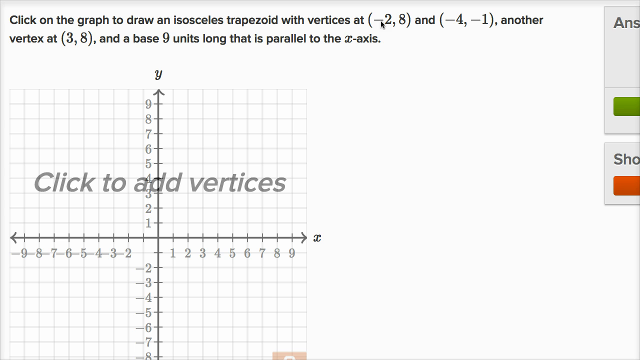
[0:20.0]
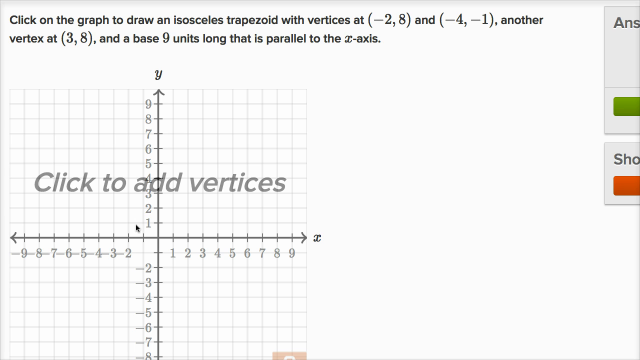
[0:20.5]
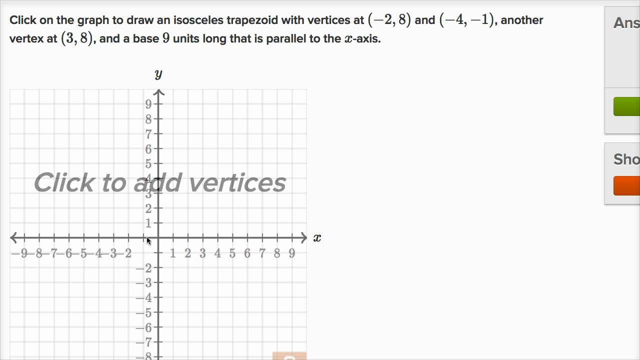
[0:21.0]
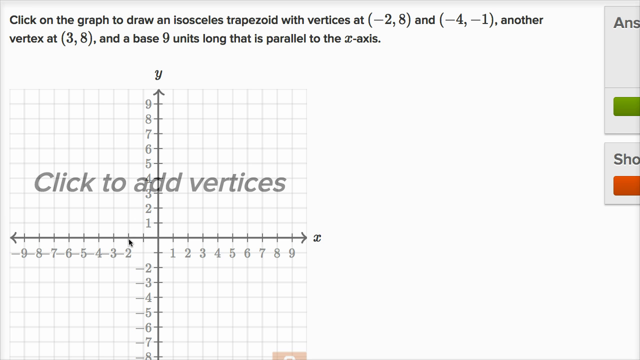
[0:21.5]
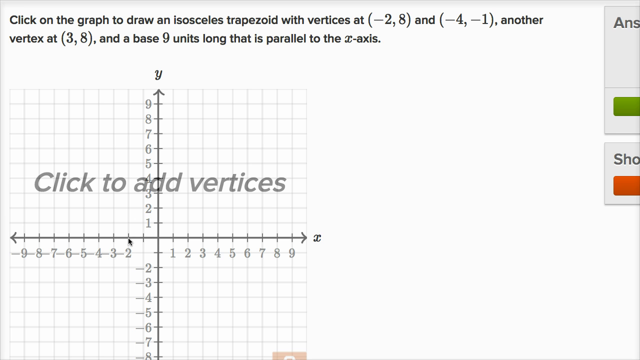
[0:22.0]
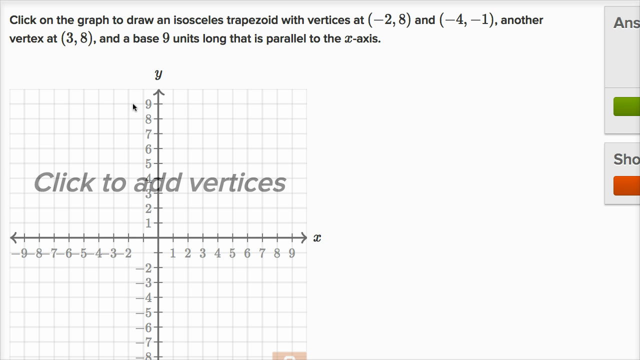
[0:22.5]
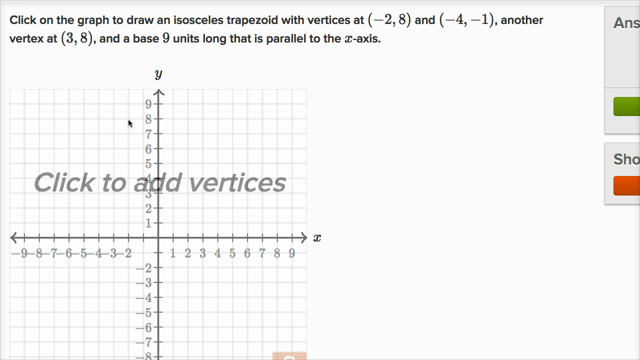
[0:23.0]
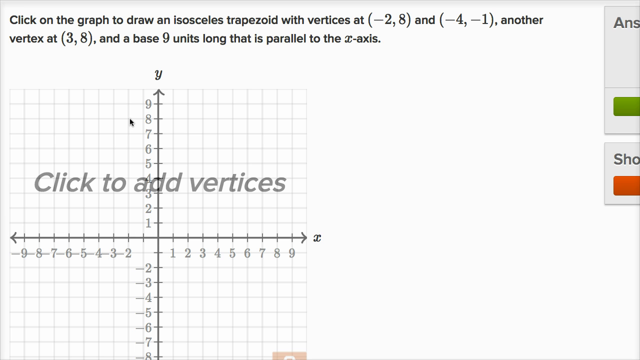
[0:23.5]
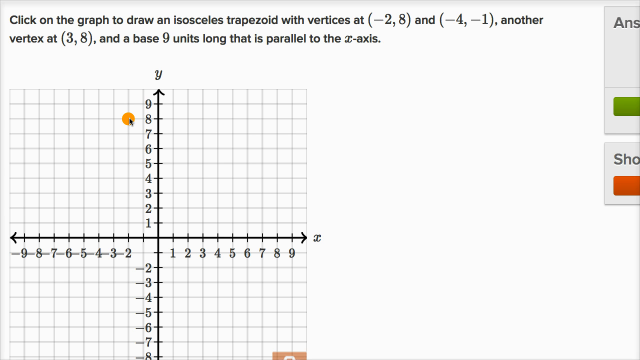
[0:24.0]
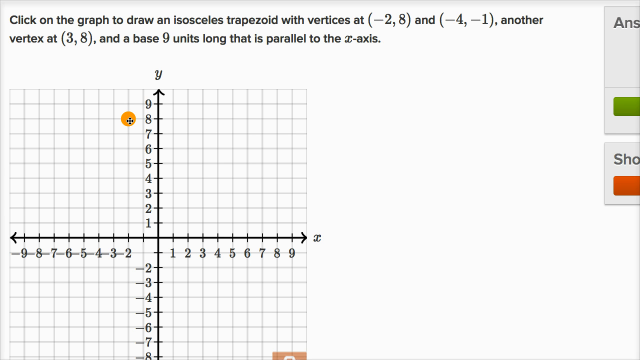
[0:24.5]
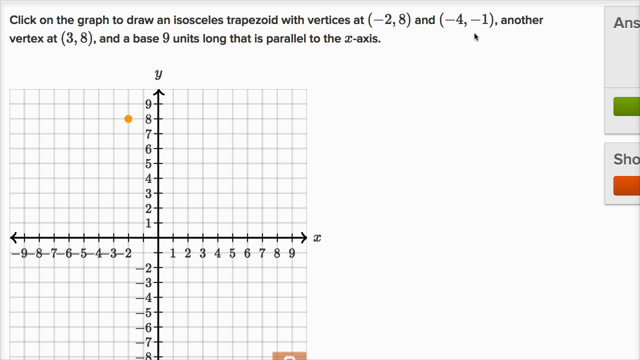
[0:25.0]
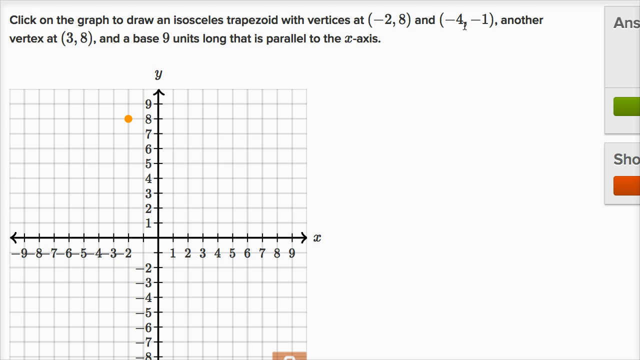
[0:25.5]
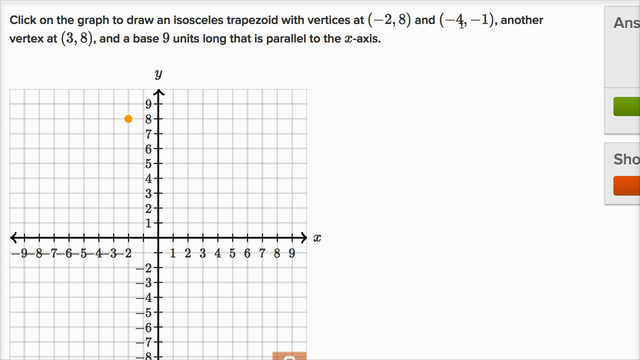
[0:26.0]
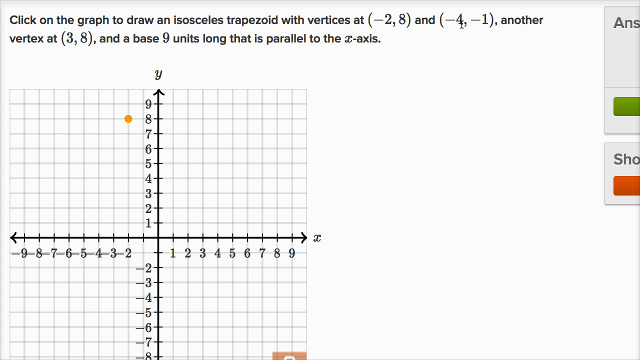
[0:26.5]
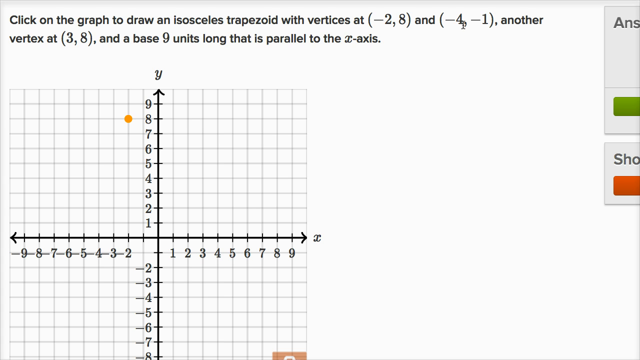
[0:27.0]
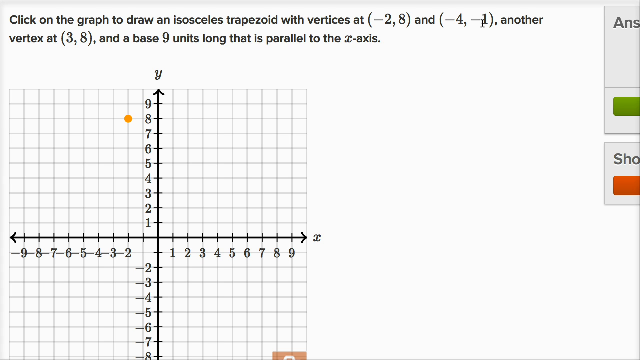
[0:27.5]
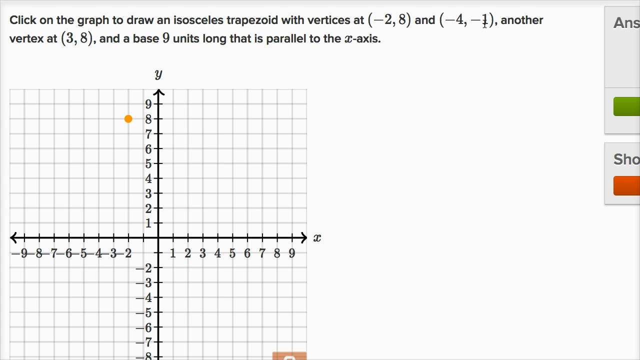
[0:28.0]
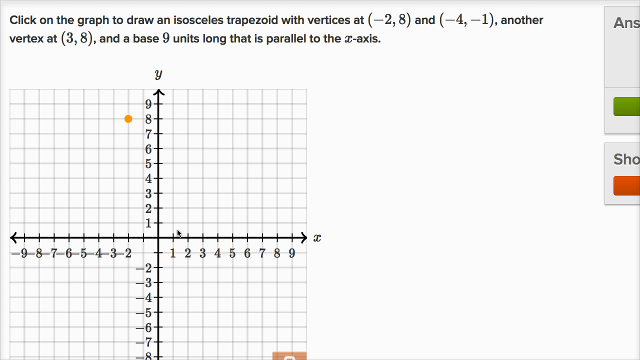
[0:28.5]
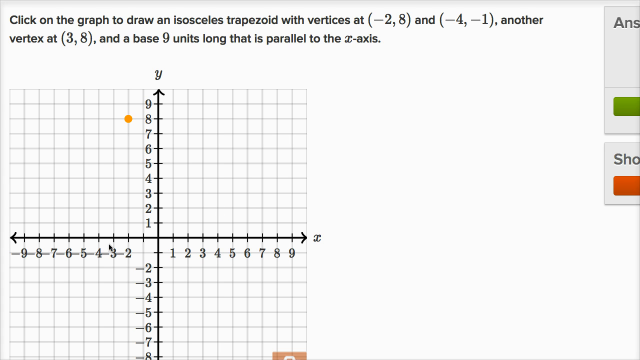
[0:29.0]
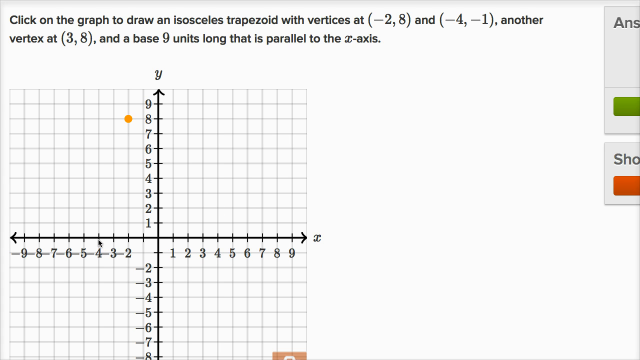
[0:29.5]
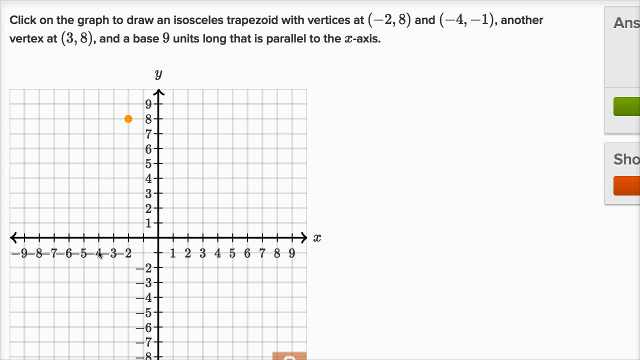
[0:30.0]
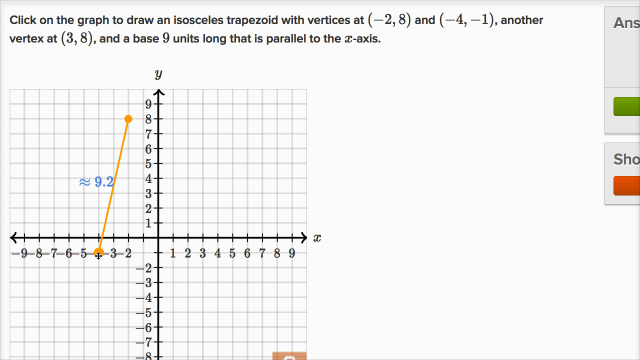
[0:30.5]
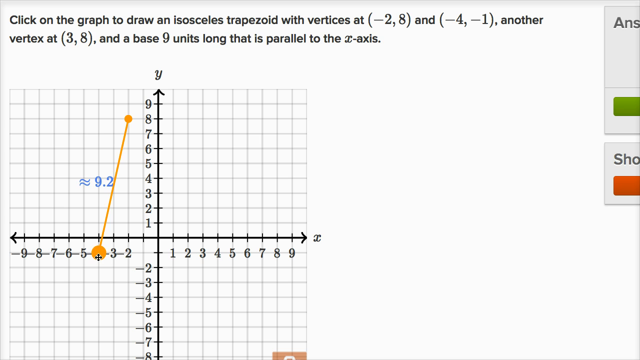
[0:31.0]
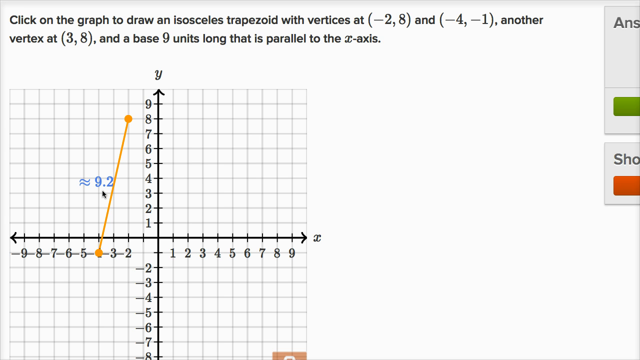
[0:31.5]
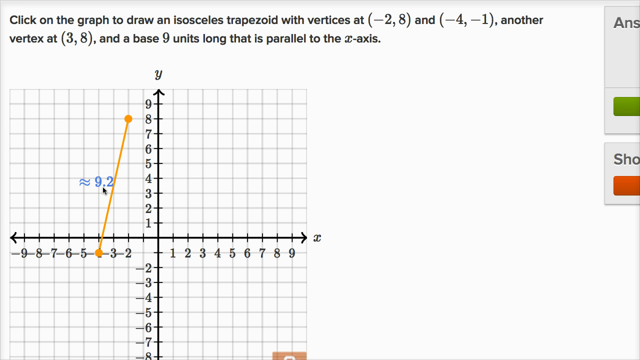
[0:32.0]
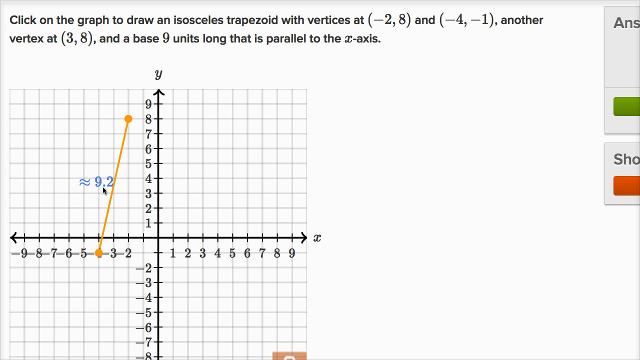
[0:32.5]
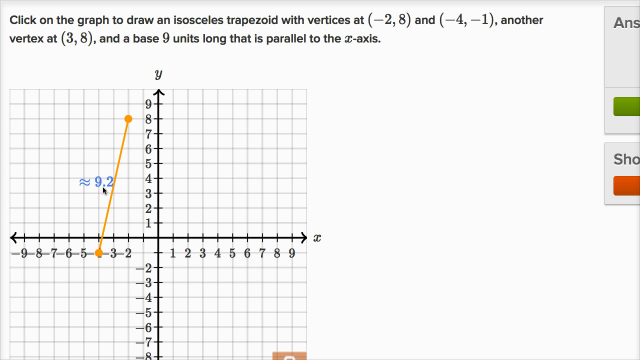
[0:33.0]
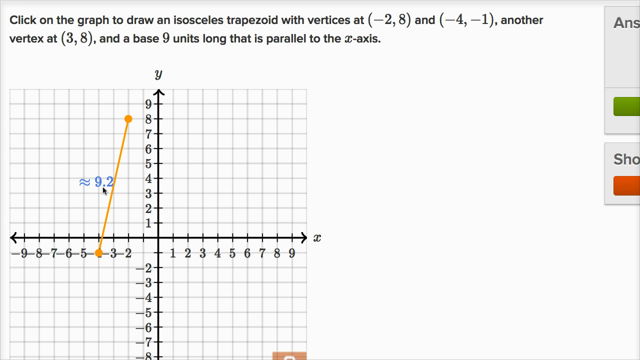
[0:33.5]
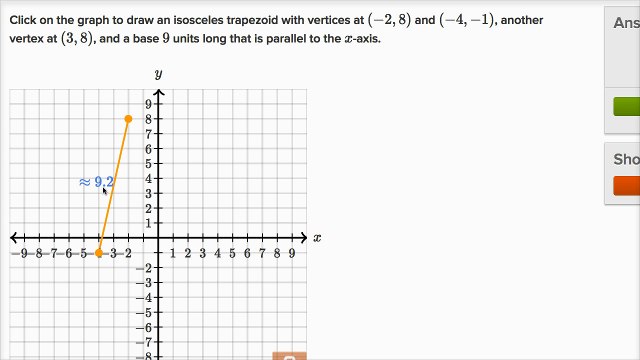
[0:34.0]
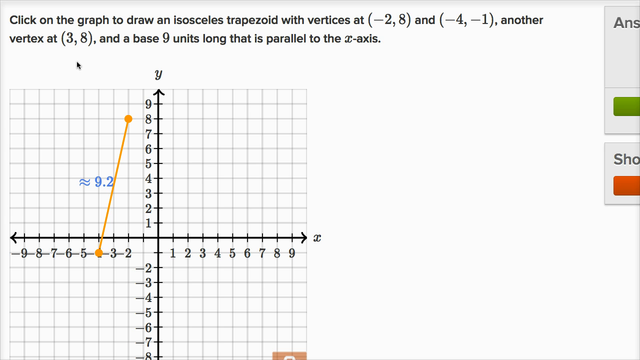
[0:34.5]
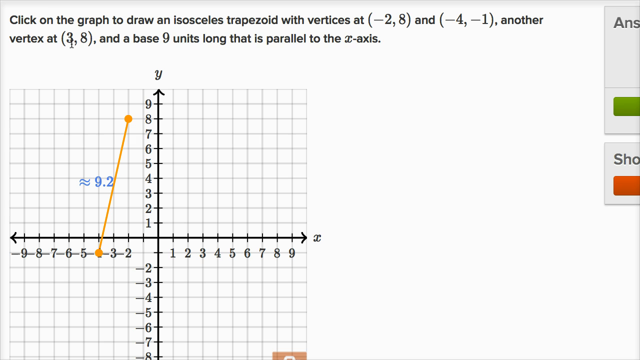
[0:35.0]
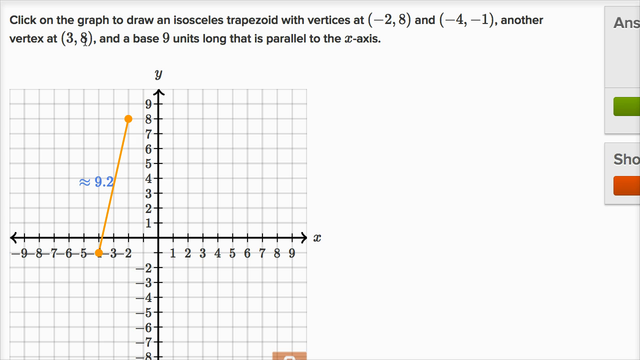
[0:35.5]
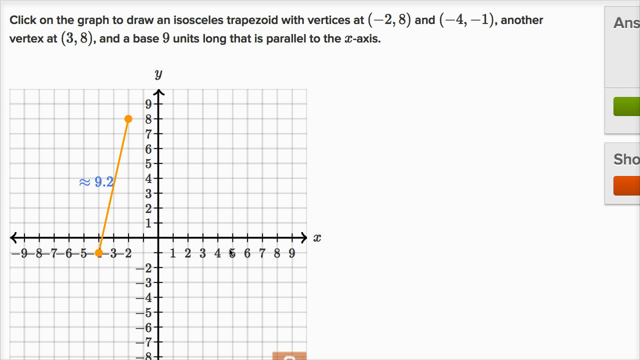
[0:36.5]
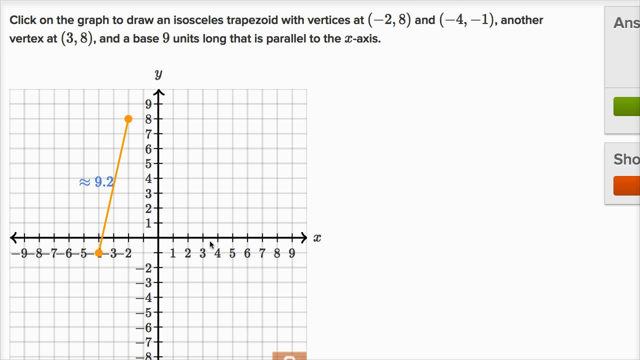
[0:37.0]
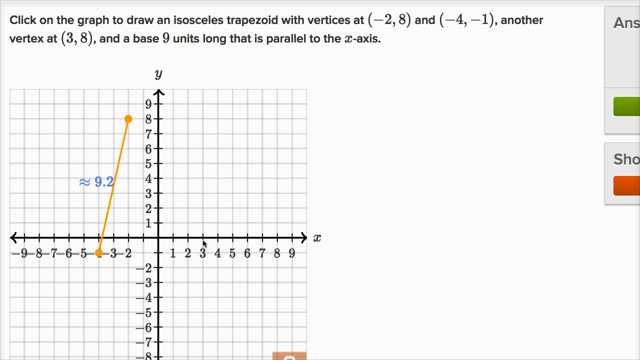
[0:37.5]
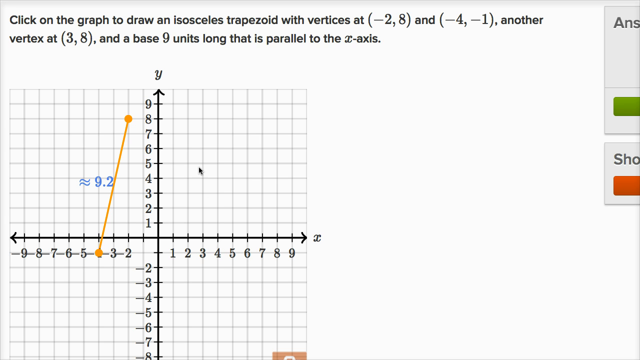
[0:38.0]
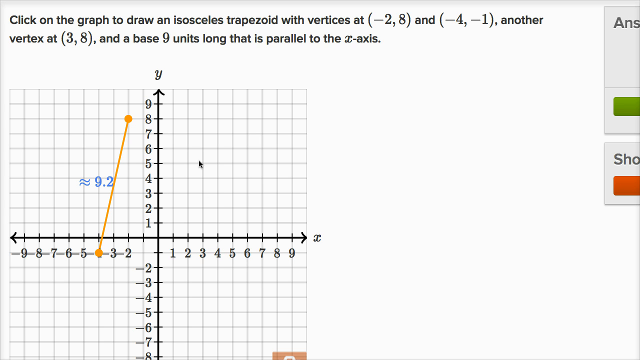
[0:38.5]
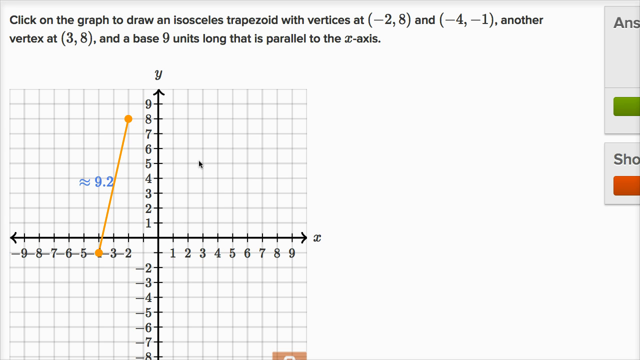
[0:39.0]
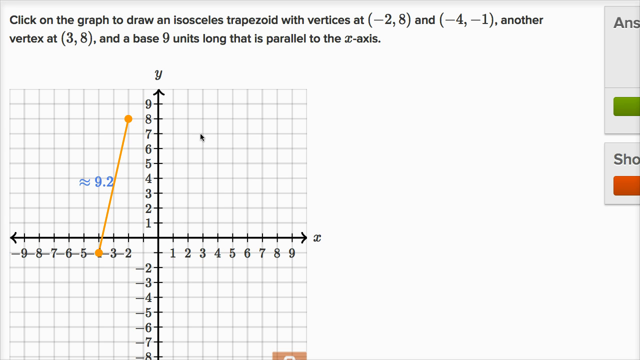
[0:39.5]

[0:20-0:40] The graph is still shown. An orange line runs from the top number 8 down to the bottom number 1, and a value of -9.2 is shown. The vertices listed are (-2, 8) and (-4, -1), with another vertex at (3, 8) and a base 9 units long parallel to the x-axis. In the middle of the graph is the instruction to create vertices. The horizontal axis below has numbers, and there is an x on the right.